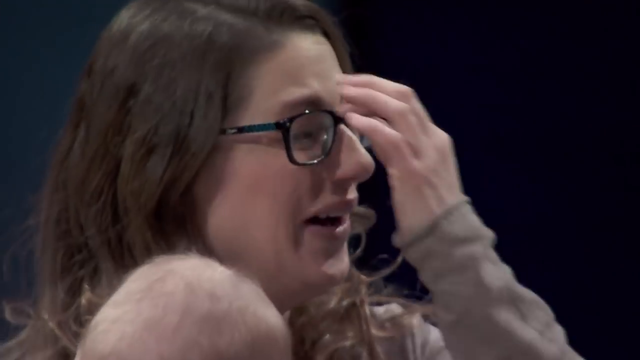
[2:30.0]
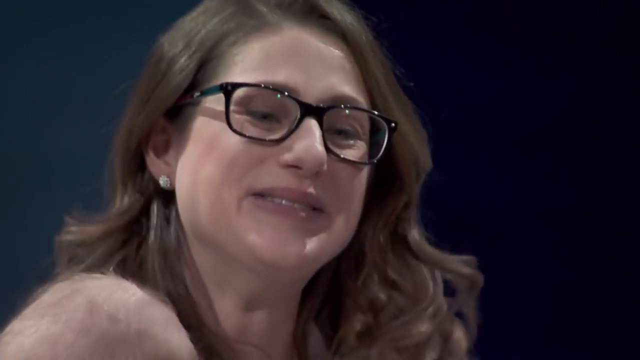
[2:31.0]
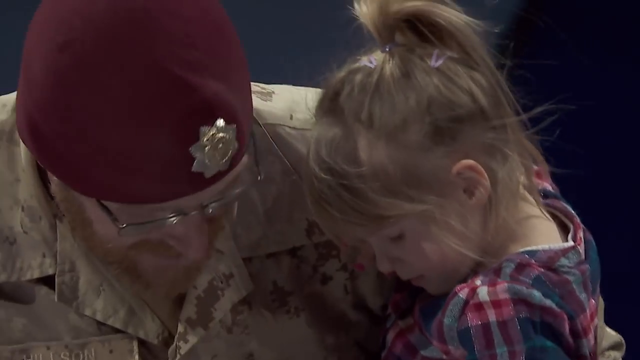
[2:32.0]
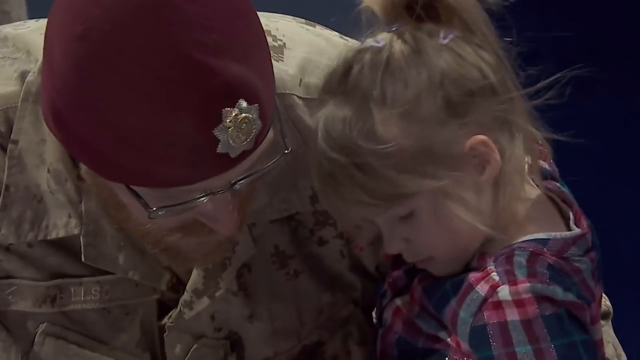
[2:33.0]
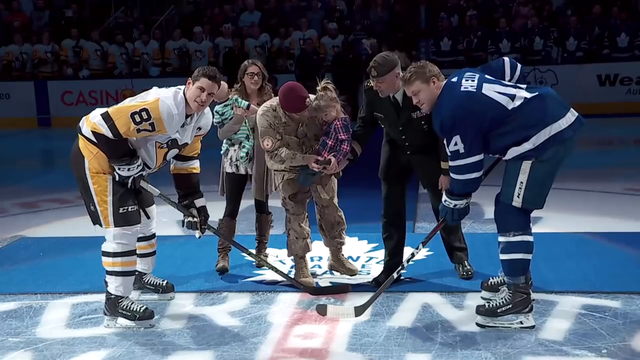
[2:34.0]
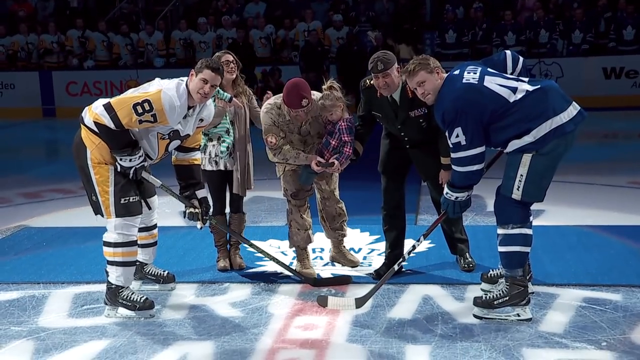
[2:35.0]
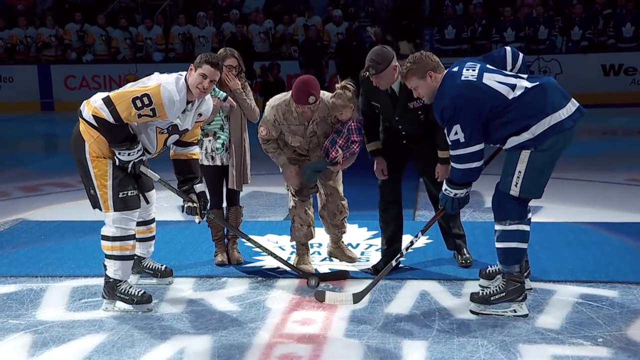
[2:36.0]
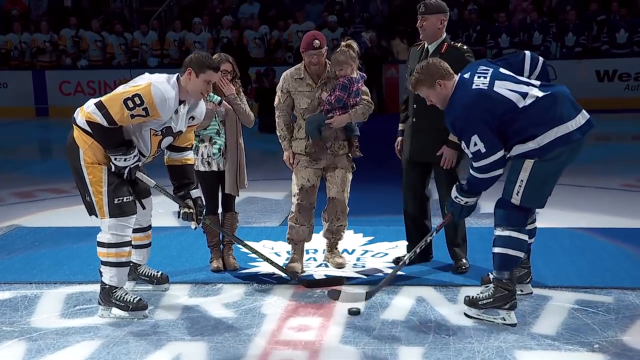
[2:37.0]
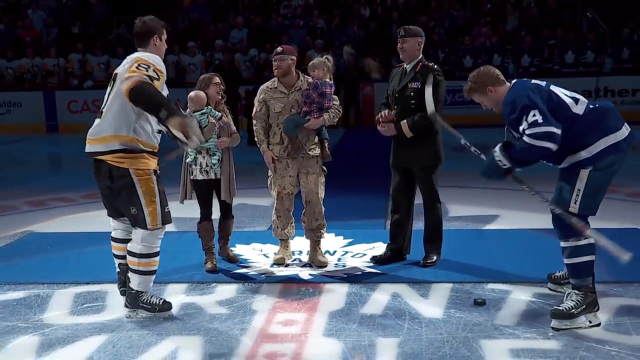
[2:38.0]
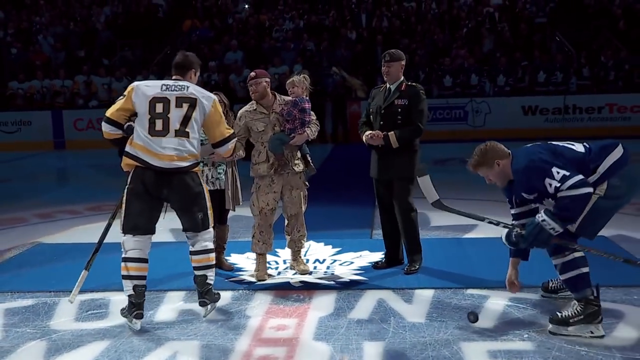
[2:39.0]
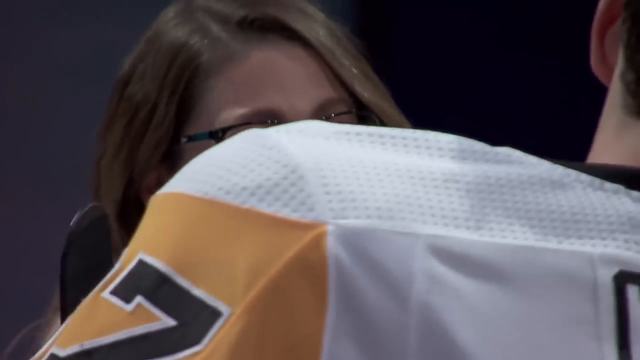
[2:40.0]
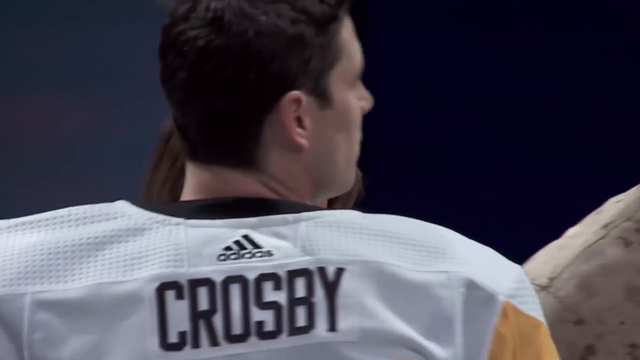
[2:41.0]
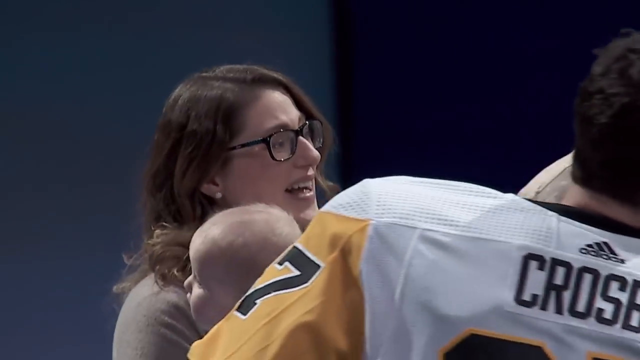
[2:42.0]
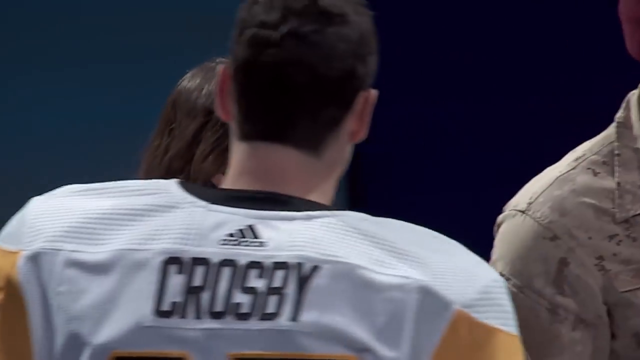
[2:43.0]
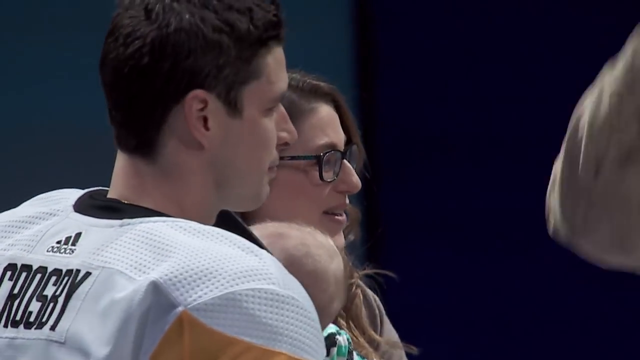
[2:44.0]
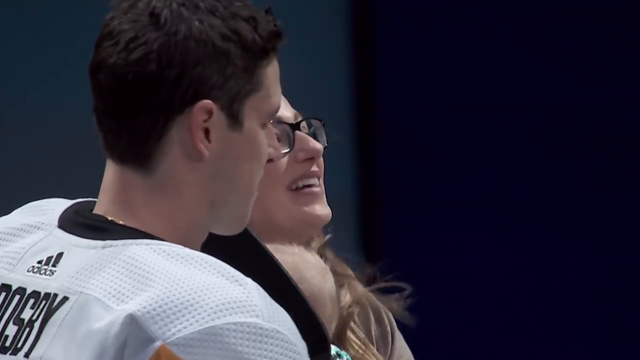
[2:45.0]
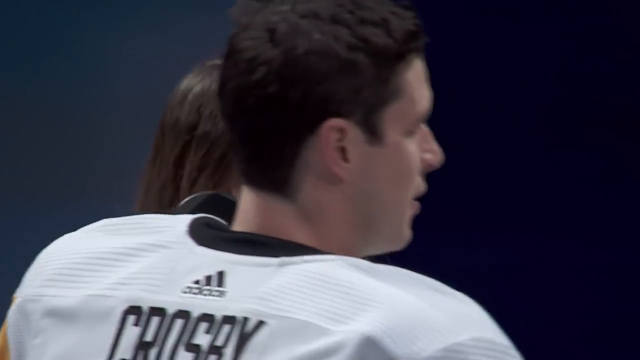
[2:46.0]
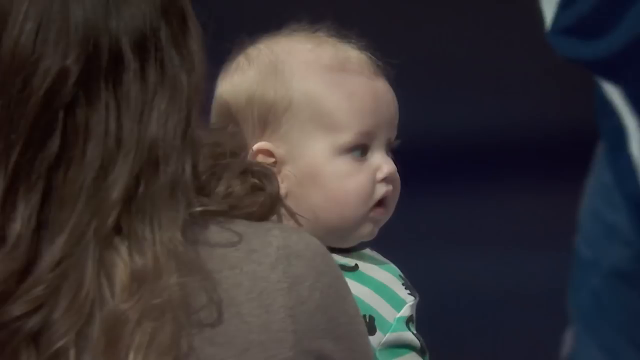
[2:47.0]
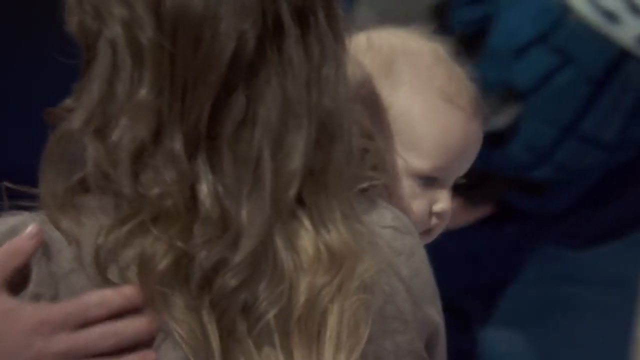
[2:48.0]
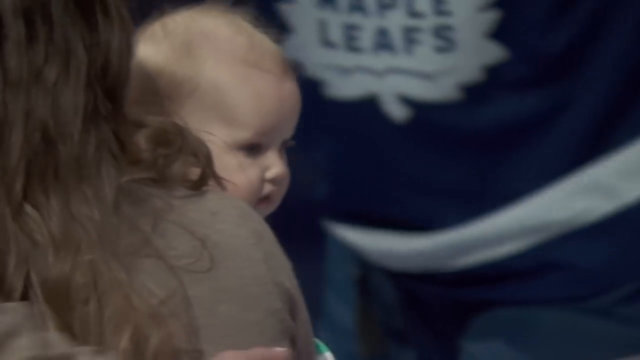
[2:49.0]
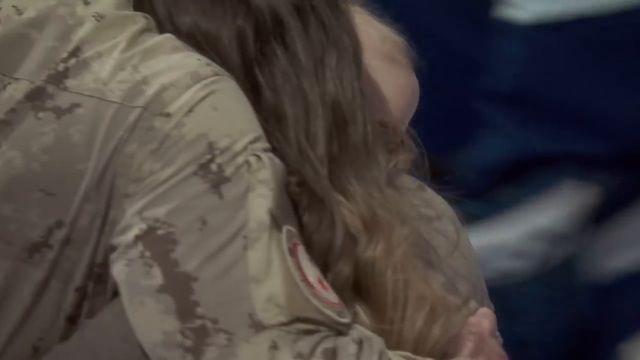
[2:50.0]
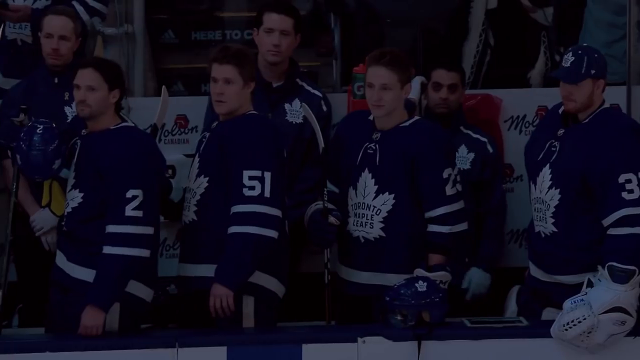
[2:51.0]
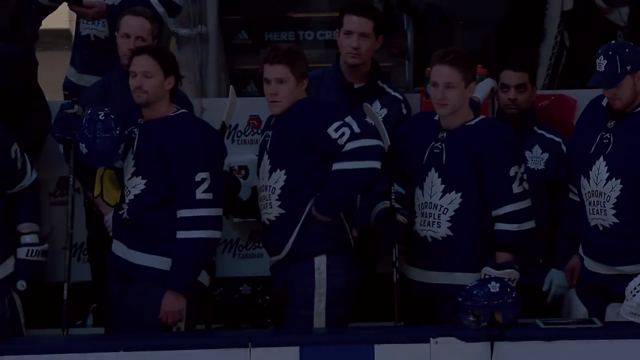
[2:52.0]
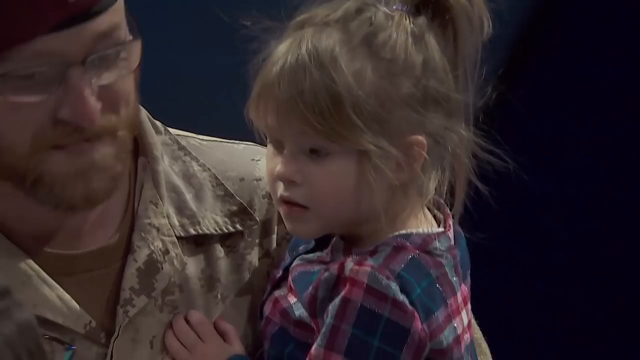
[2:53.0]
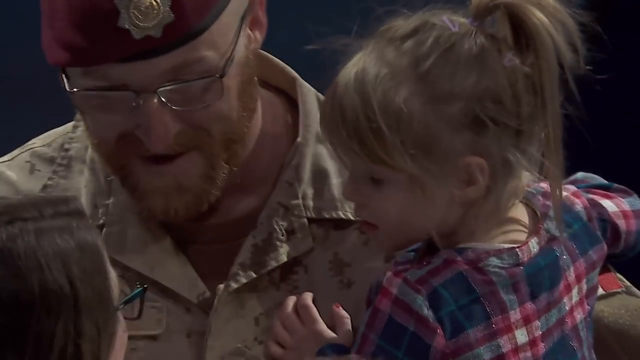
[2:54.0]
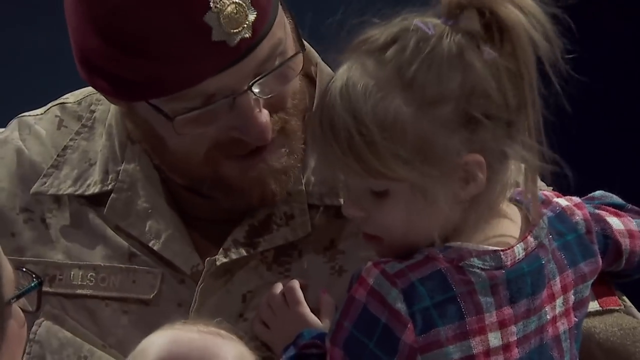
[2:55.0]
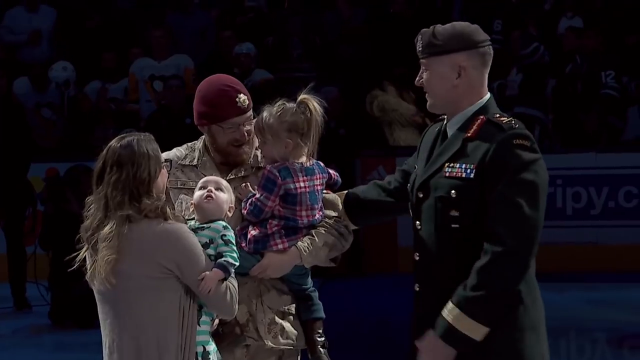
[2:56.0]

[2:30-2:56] The mom combs her hair over, apparently using her left hand to reach the opposite side. She turns, emotional and happy, with tears of joy. A close-up shows the dad. She bends and turns to her daughter, who looks down, almost overcome. The players pose again with their sticks, bent over for one more shot. The older gentleman comes over and gives the puck to the dad and the older daughter, who drop it in front as a picture is taken. Number 44 acts as if he is getting it, pulling the puck over and trying to pick it up, but it slips out of his hand. Someone goes around shaking hands with everyone, stands beside the wife for a moment, and shakes more hands; who is shaking hands is unclear because the frame cuts off. The baby seems unaware of what is going on. The view shows the players' bench, where helmets are off and a player puts his hand on his hip. The dad says something to his daughter and then looks at his wife and baby.